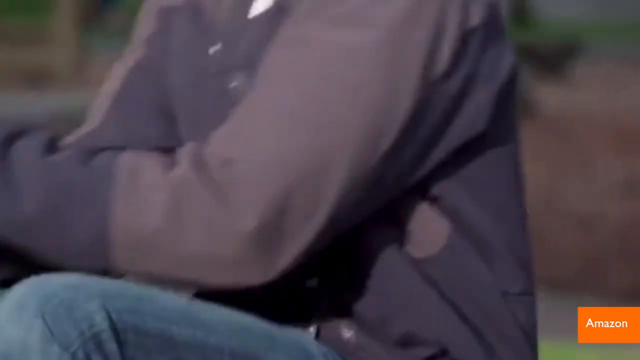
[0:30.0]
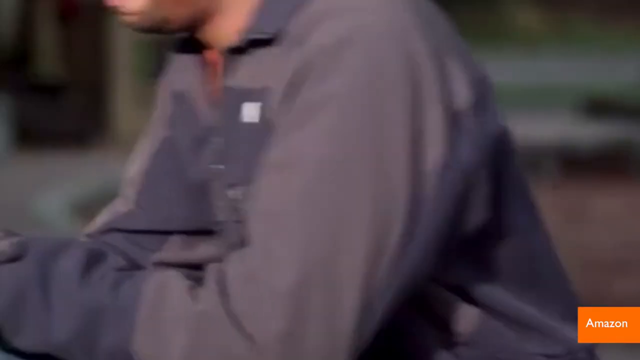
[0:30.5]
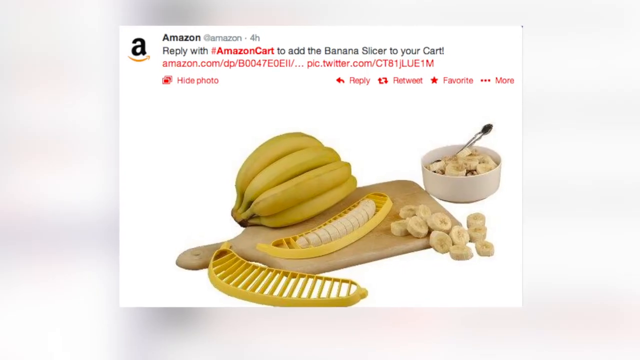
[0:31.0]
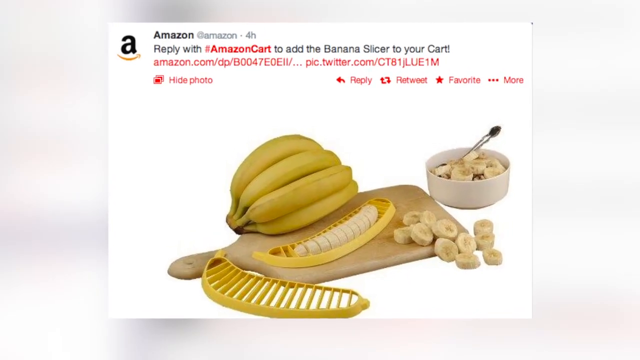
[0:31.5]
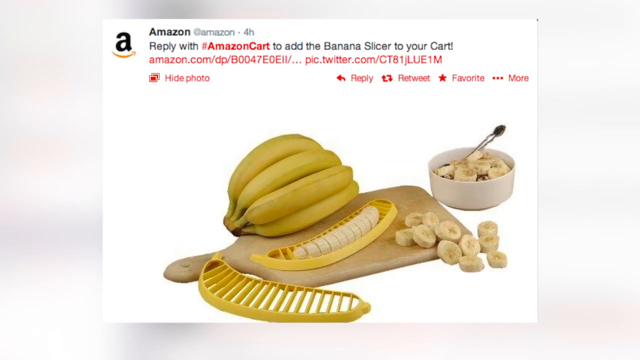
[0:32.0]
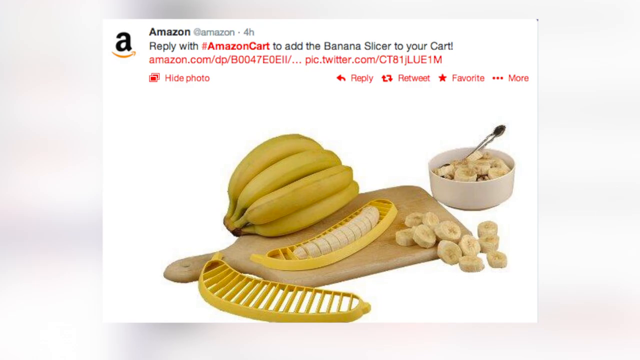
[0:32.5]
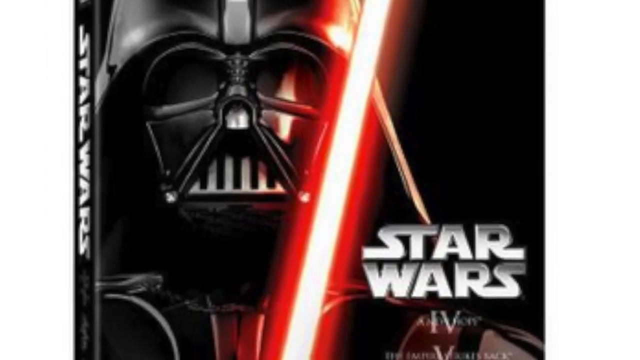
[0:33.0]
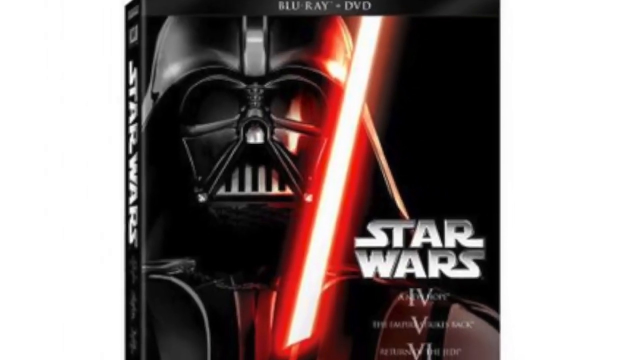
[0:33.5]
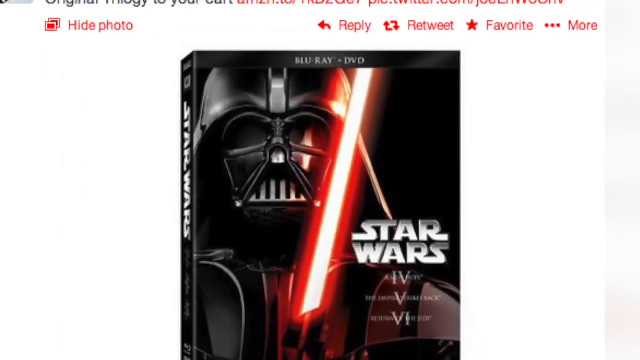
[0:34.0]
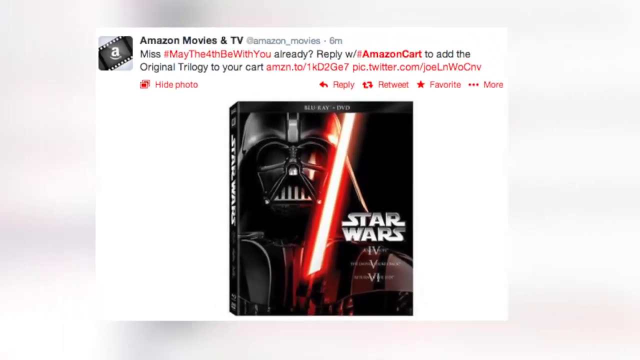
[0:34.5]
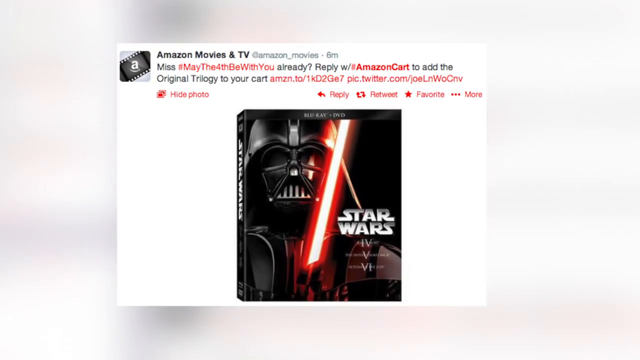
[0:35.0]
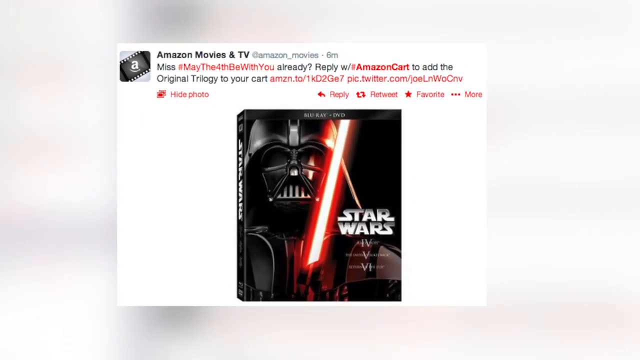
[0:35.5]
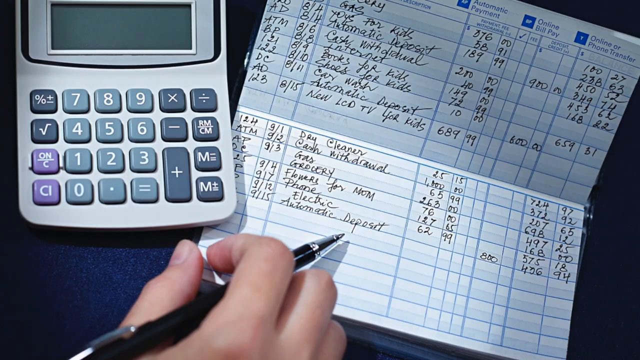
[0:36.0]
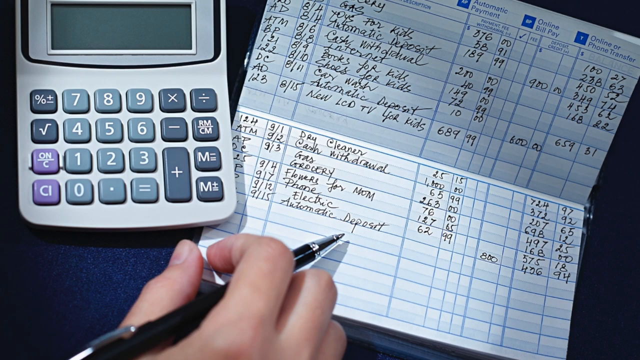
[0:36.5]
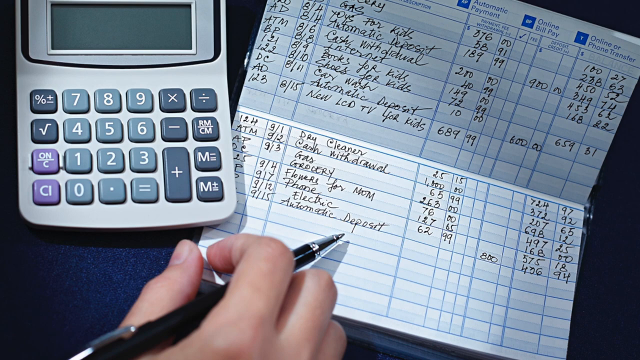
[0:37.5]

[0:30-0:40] The middle-aged African-American man sits on a bench going through his phone; he looks like he is outside, maybe at a park. Amazon text reads "reply with Amazon cart to add the banana slicer to your cart," with a banana slicer, a bunch of bananas in a bowl, and information on how to add the product to Amazon cart on what looks like social media. Next comes a Star Wars post reading "may the fourth be with you already? Reply Amazon cart to add their original trilogy to your cart." A calculator with bills and deposits is shown very quickly. The man looks like he is looking for something, and something about Pampers flashes by very quickly as the content scrolls quickly on the screen.